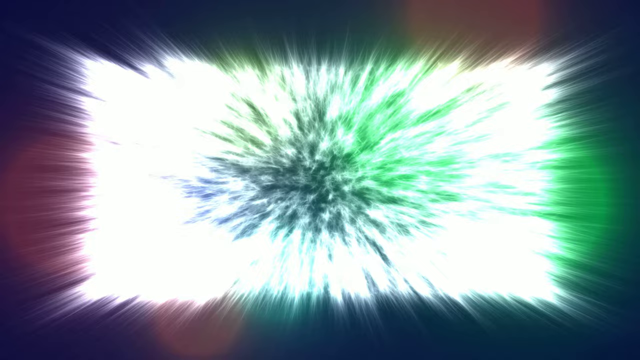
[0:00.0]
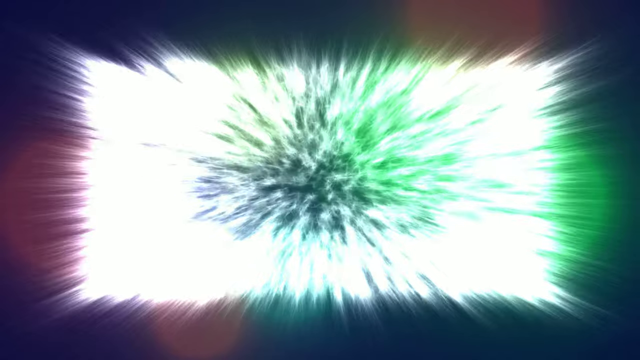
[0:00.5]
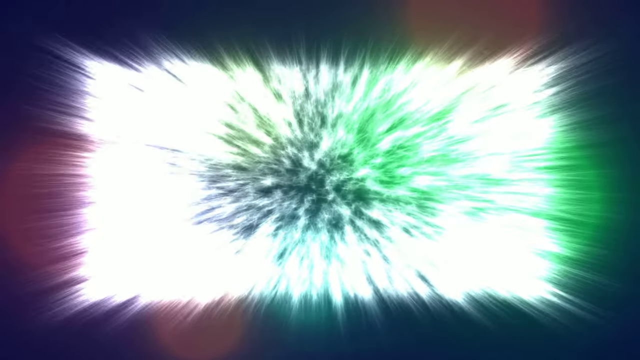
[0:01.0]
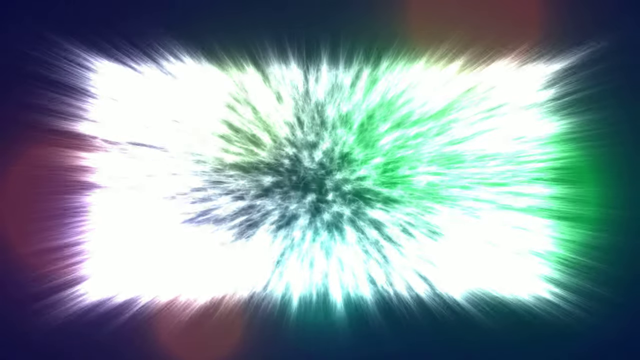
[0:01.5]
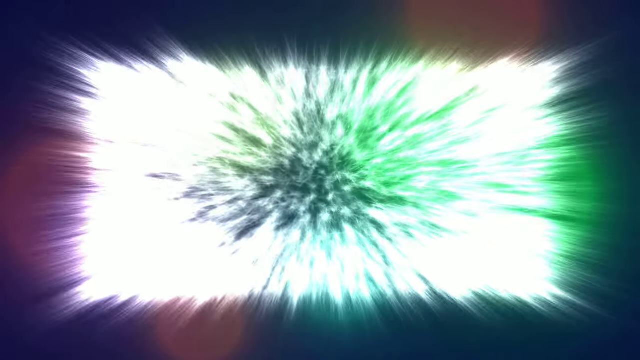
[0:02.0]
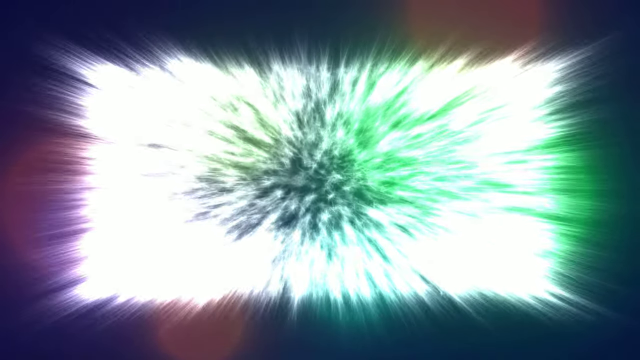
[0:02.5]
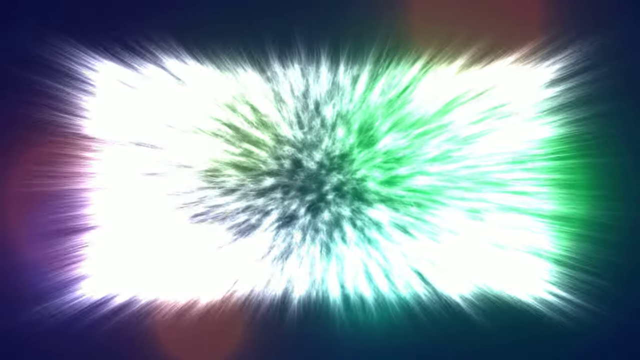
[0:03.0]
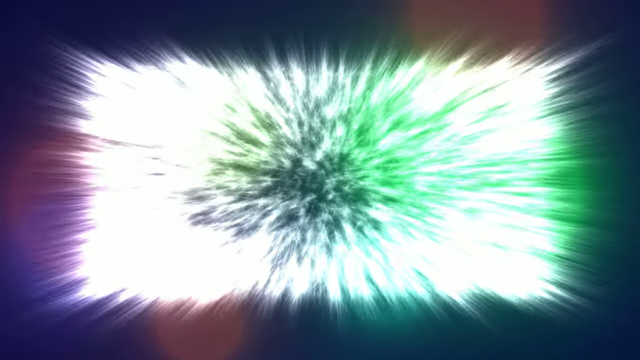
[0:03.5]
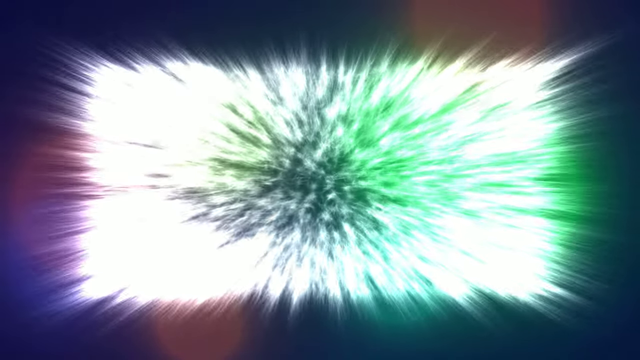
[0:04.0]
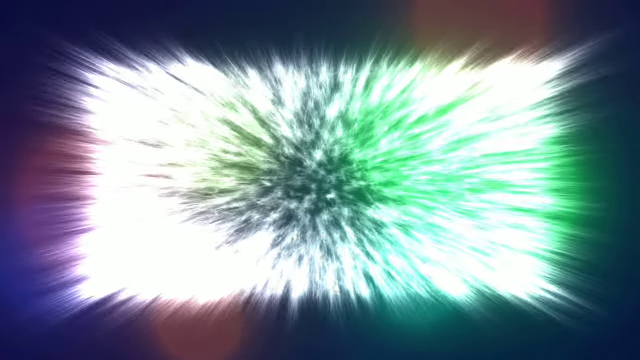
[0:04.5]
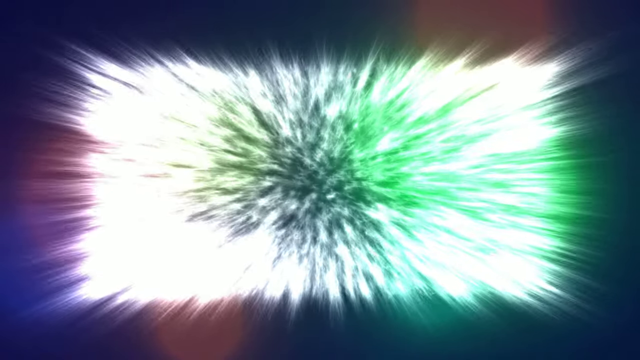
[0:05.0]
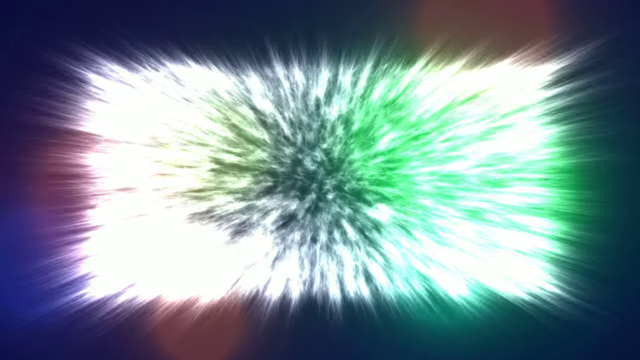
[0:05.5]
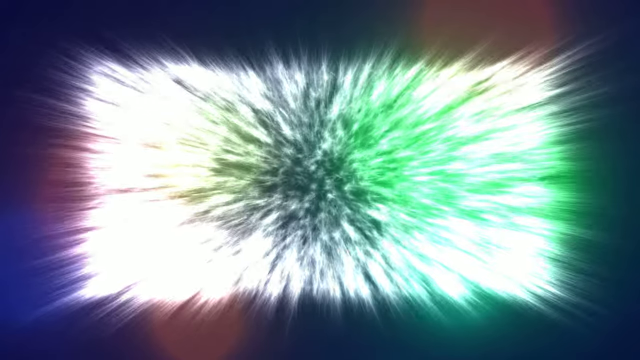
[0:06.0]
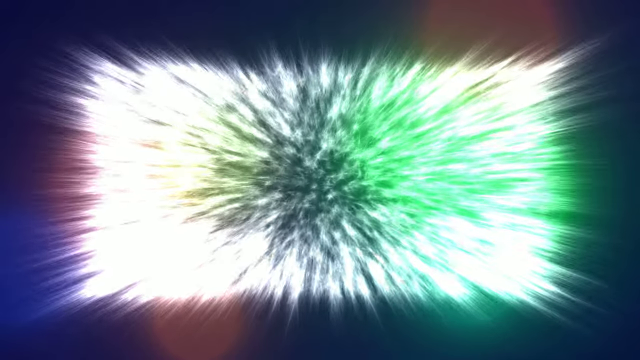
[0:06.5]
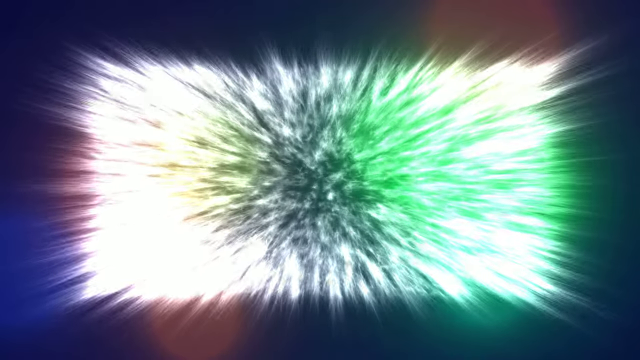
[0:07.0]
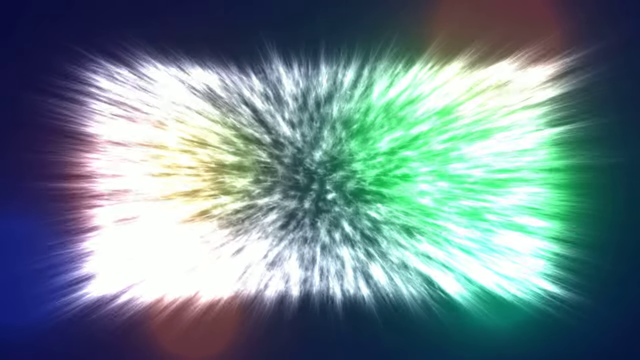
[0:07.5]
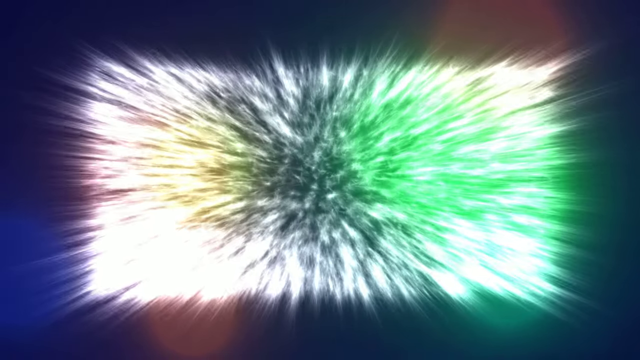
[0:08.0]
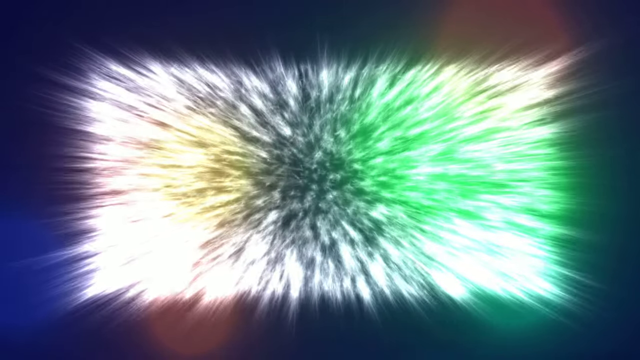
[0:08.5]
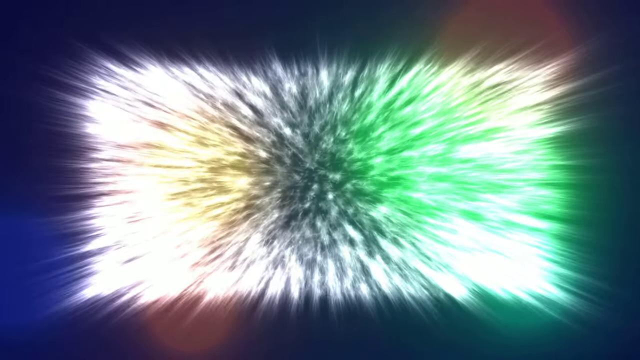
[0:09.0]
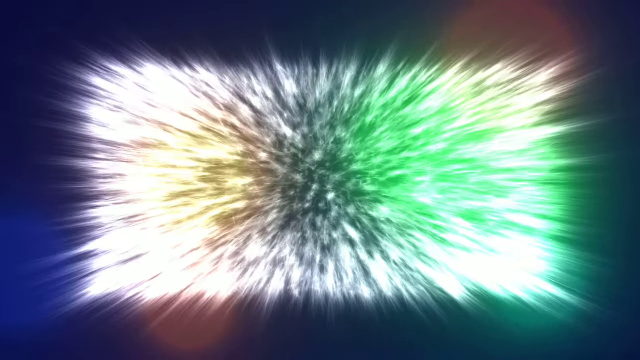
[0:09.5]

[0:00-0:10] Different colors, such as green, yellow and pink, go in and out of focus, with what is almost a dark black hole in the middle. The shape is square or rectangular, with almost rainbow colors. It does not stay still, focusing in and out almost like breathing, and yellow slowly appears from that part while the colors remain the same. The top left is more of an ultraviolet maroon color, the top middle is black and more transparent, the right is a green lantern color, and the bottom middle is turquoise. Throughout, there are shards that pulse almost like a heartbeat, stopping and going over and over again, with visible textures, sizes and shapes. It almost looks like something out of space. There is a small orange bubble in the bottom left corner, and the middle is almost a dark, deep hole.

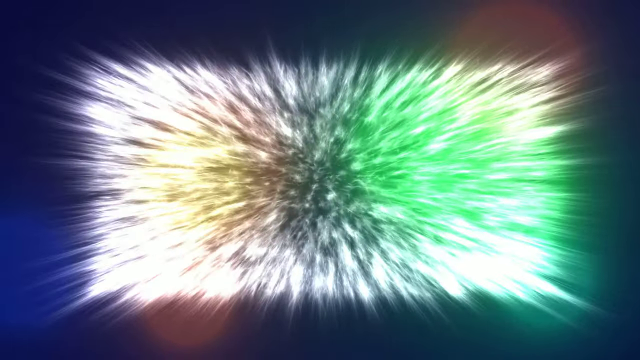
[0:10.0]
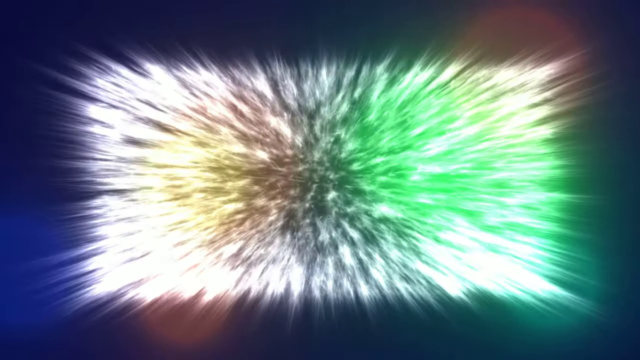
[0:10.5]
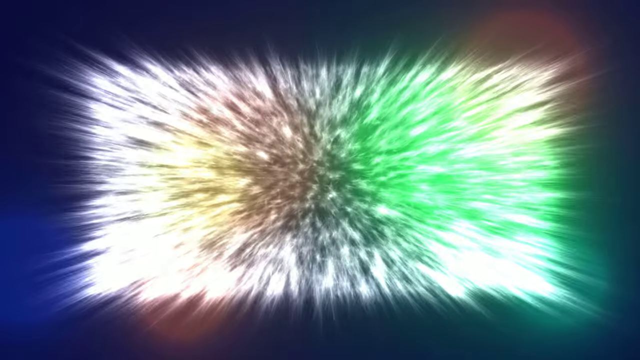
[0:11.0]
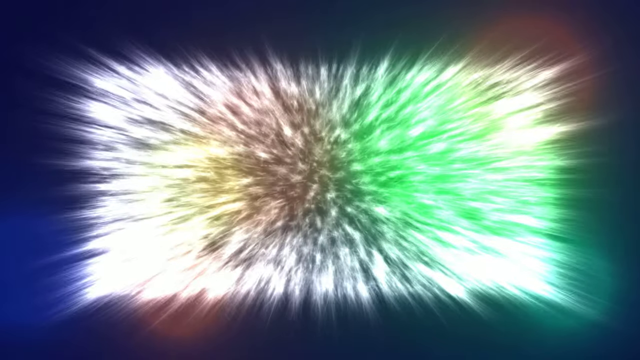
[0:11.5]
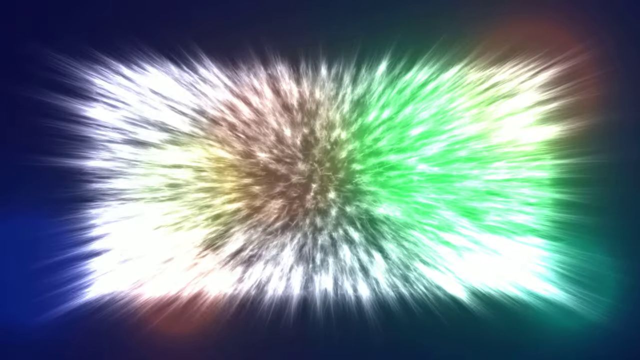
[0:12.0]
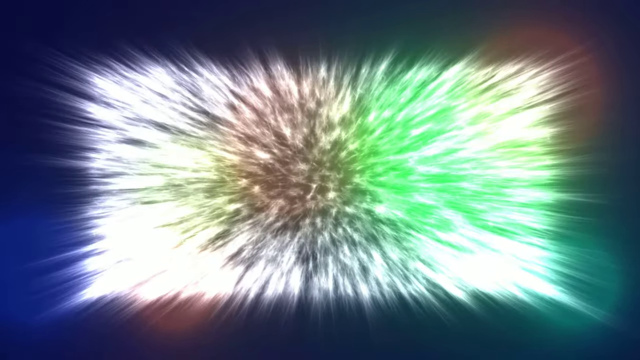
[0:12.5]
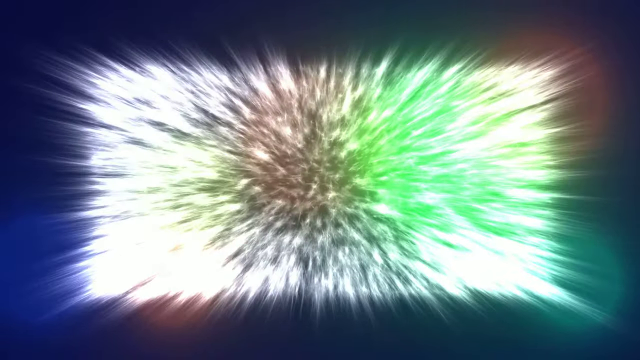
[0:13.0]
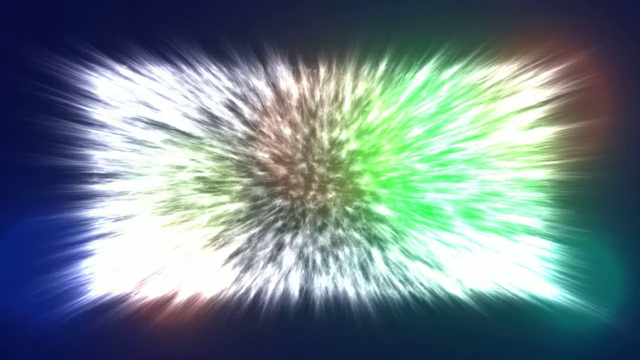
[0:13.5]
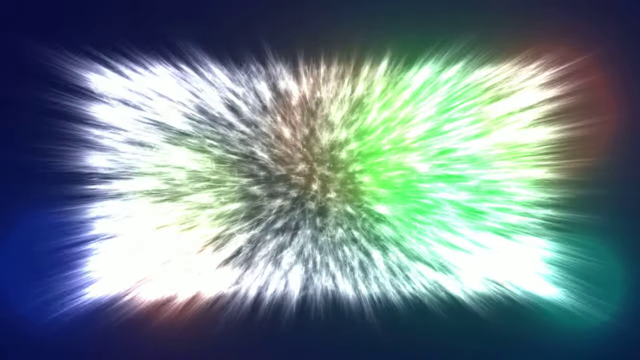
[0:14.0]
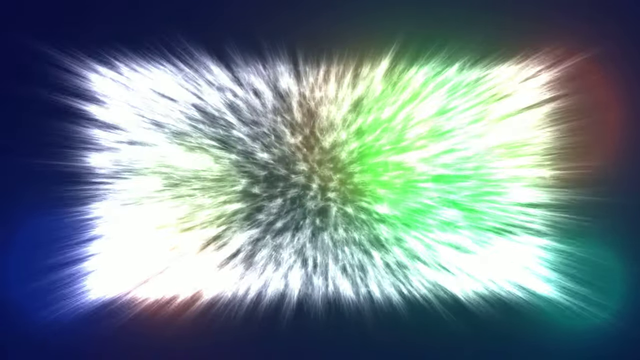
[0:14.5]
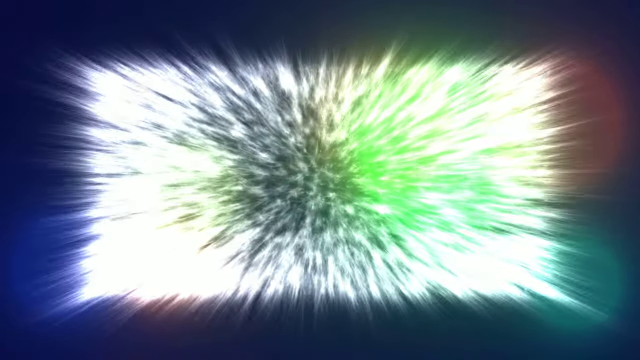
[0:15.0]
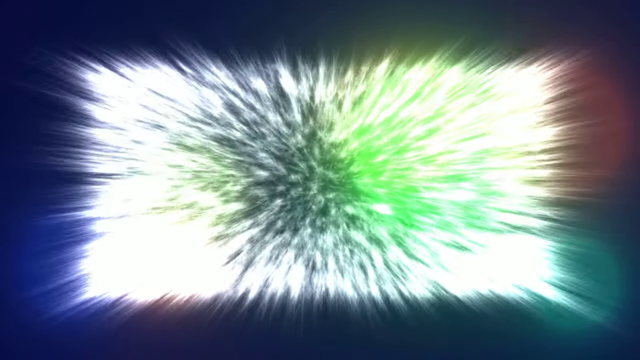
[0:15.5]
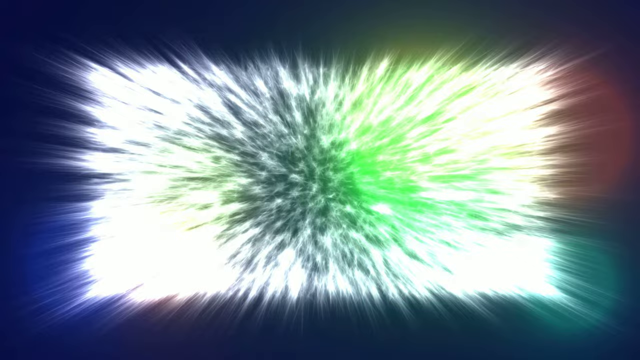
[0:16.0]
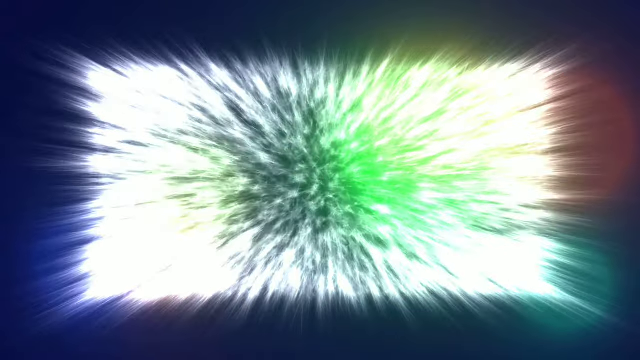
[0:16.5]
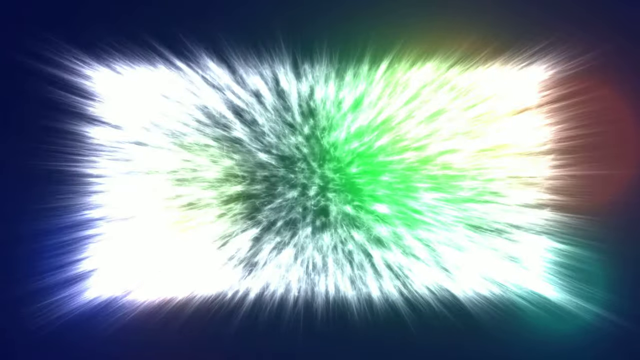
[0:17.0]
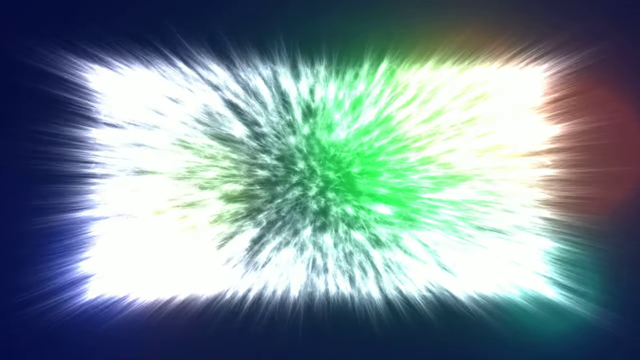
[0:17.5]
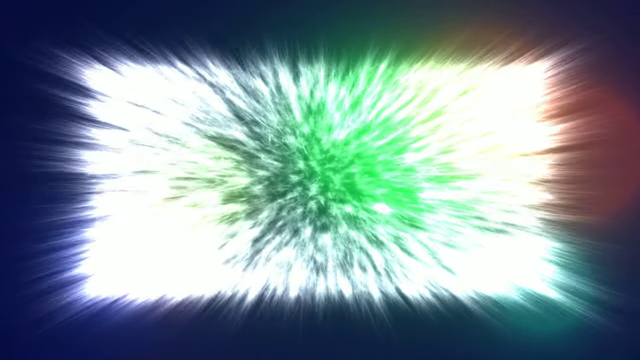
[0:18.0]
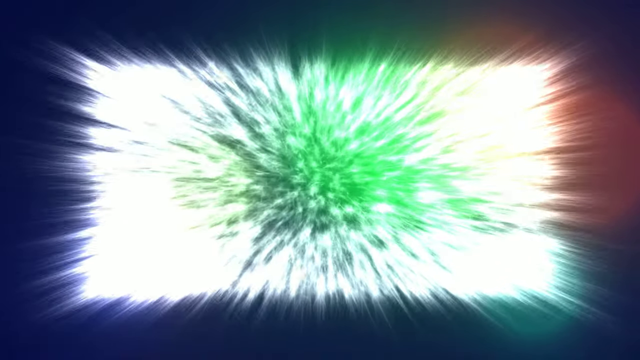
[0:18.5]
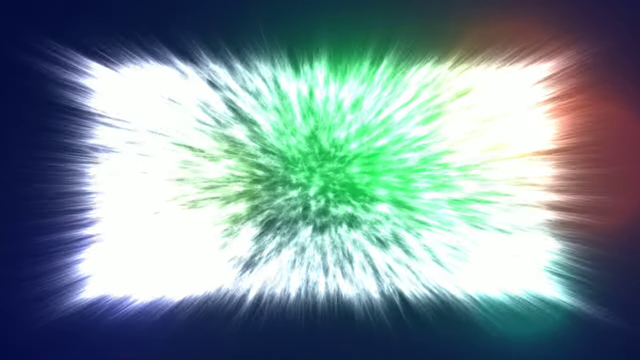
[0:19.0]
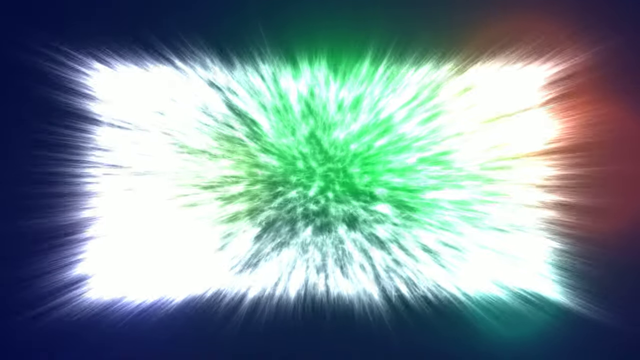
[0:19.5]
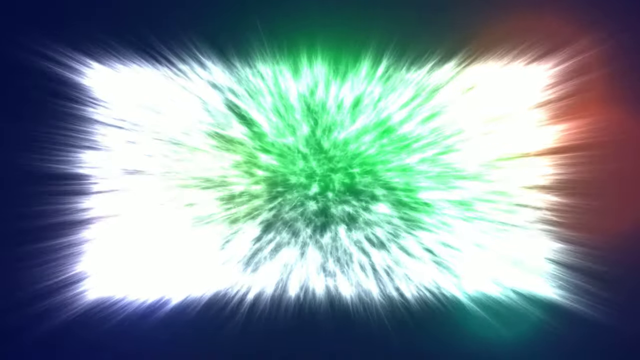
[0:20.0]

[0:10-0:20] The image is very similar, but the hole in the middle seems to begin expanding, and the green parts begin to cross over and take over part of the screen. The shards come in and out, bouncing and moving around without staying still, almost like some type of artificial alien or a star or galaxy from space. The colors are combined into one collection, like a palette or rainbow, and toward the very bottom the color is more white. In the middle there is a larger hole or unfilled zone. The yellow part is almost as big as the green part, but the green shade appears to be almost the largest component on the screen. The main subject seems to be the merging of colors and visual effects.